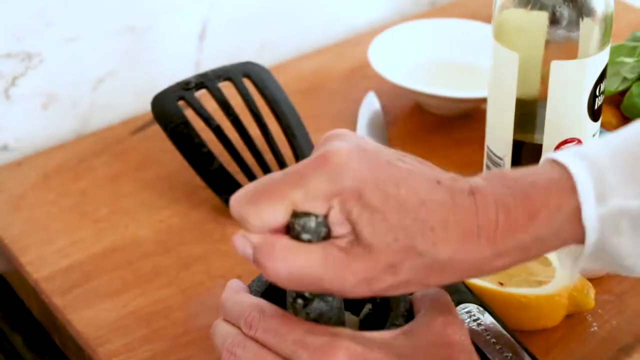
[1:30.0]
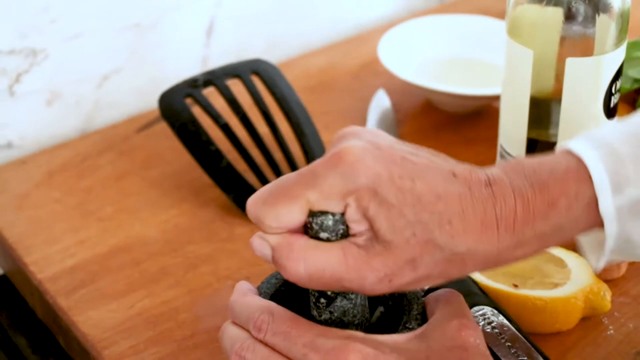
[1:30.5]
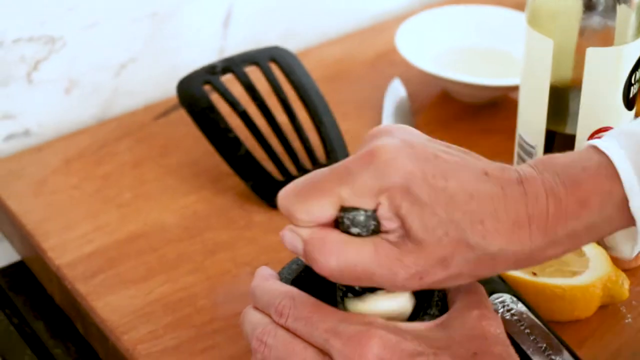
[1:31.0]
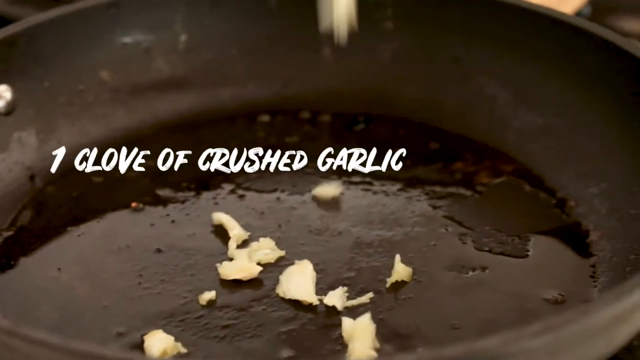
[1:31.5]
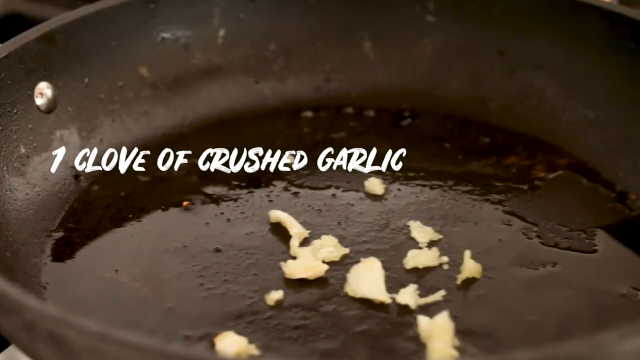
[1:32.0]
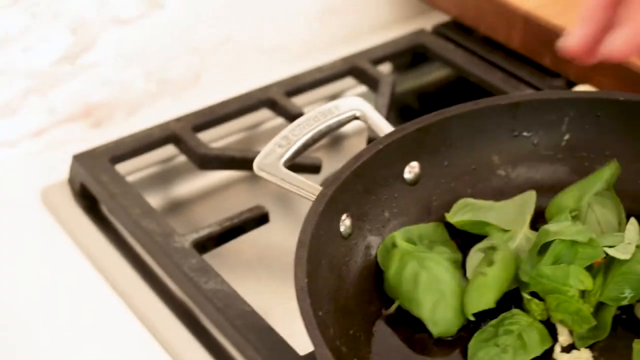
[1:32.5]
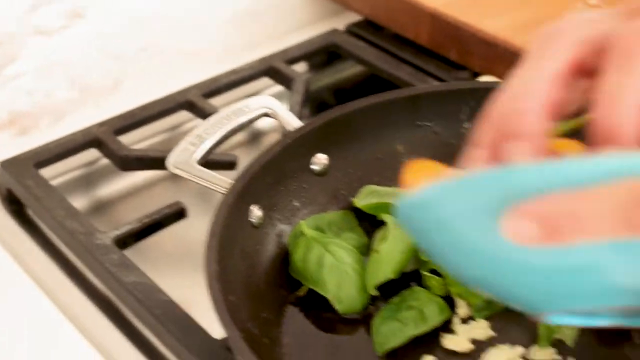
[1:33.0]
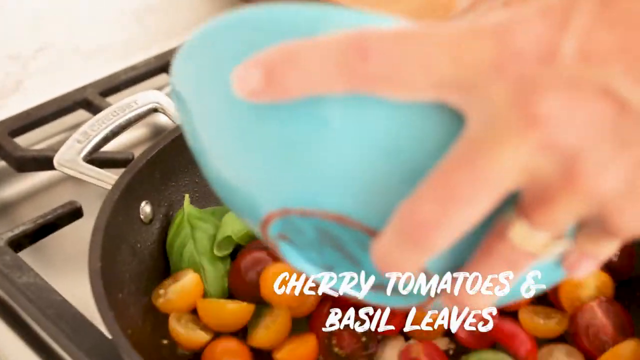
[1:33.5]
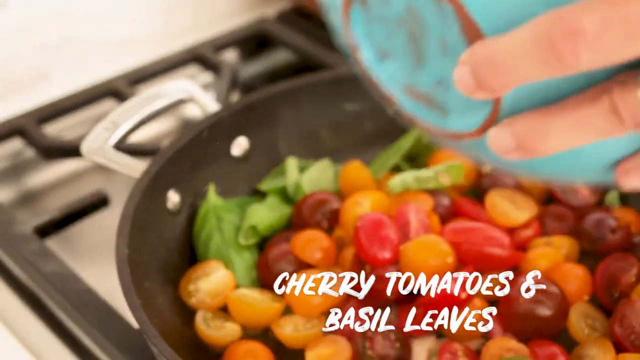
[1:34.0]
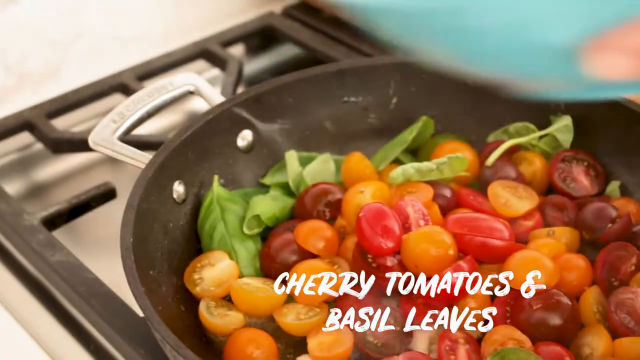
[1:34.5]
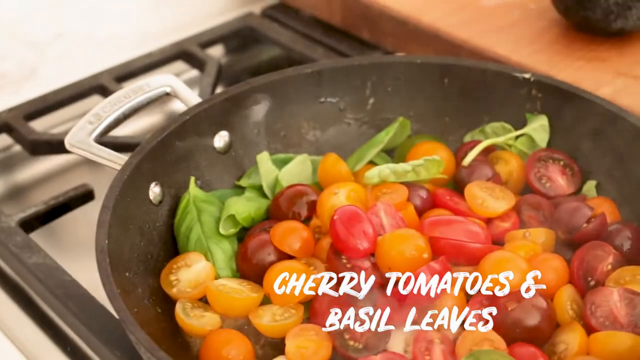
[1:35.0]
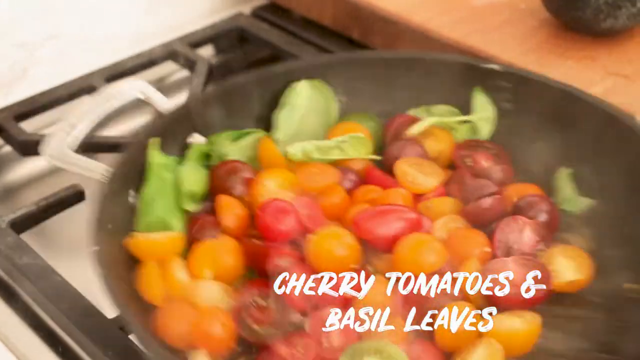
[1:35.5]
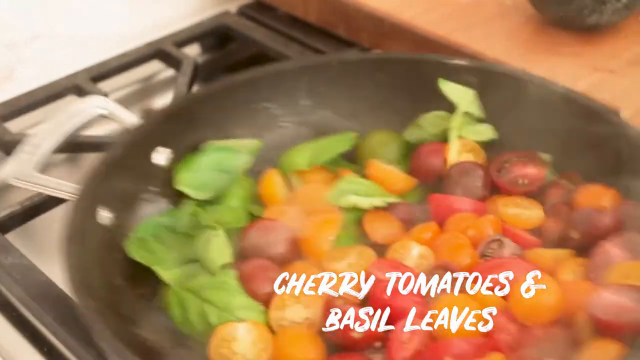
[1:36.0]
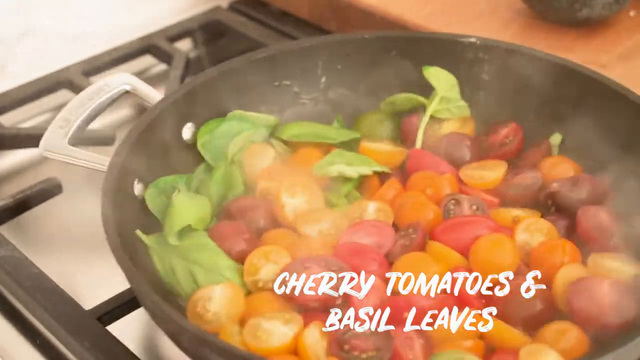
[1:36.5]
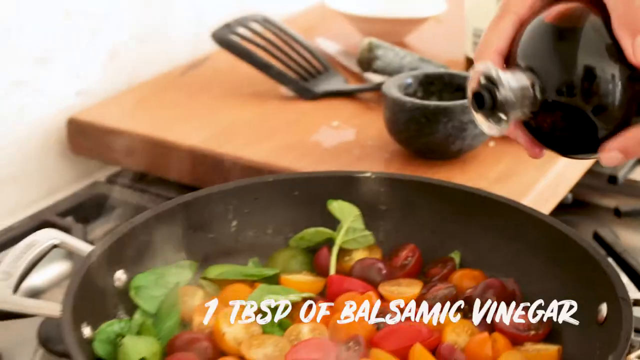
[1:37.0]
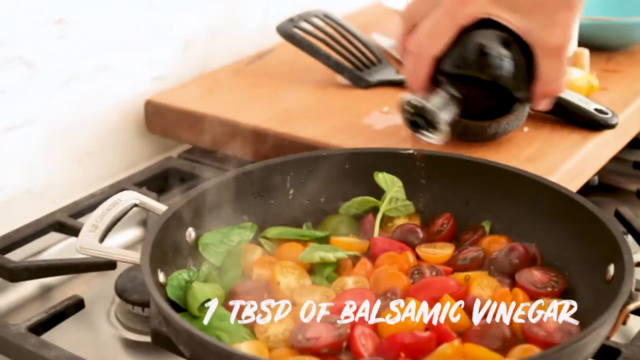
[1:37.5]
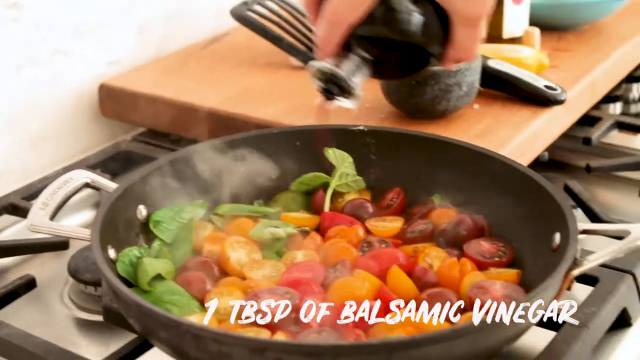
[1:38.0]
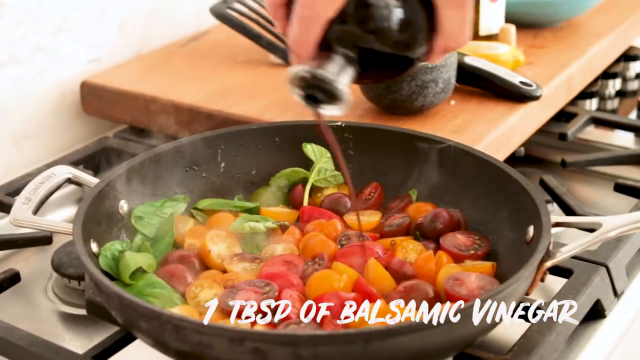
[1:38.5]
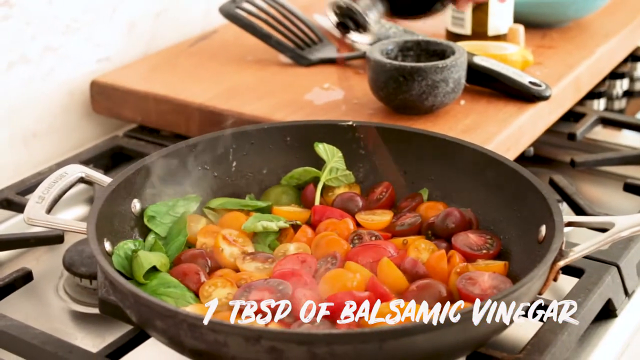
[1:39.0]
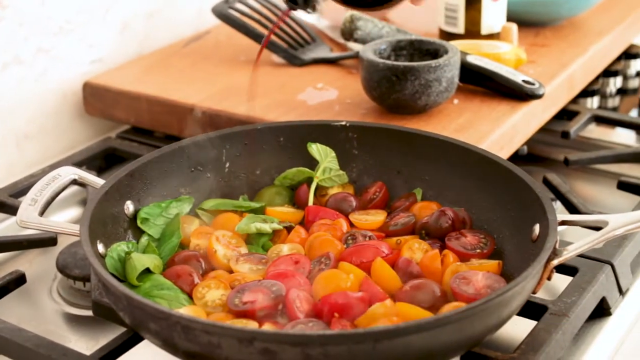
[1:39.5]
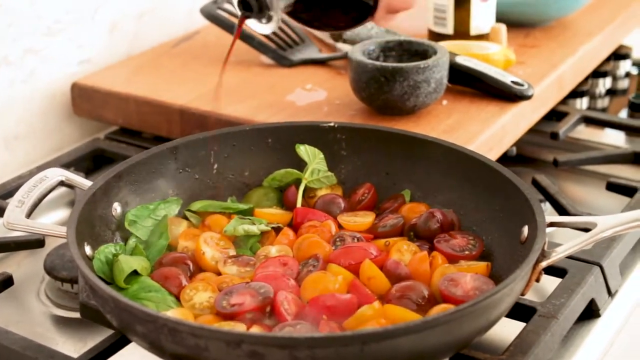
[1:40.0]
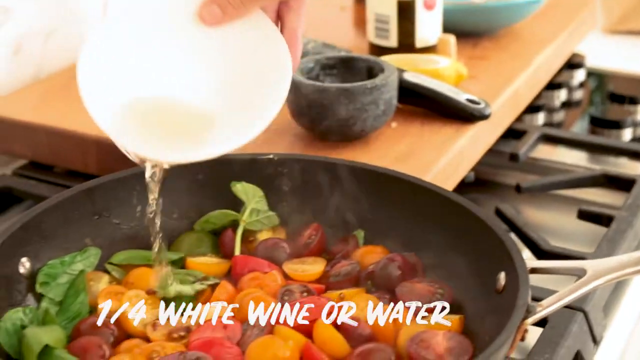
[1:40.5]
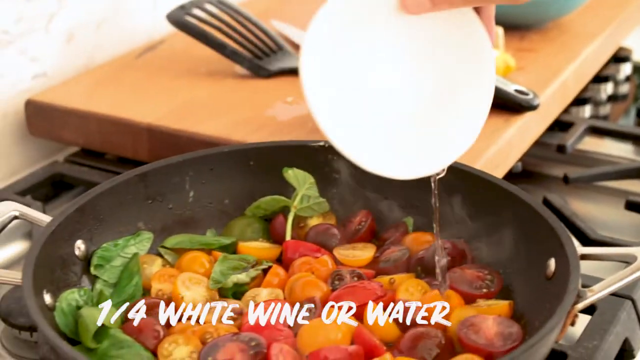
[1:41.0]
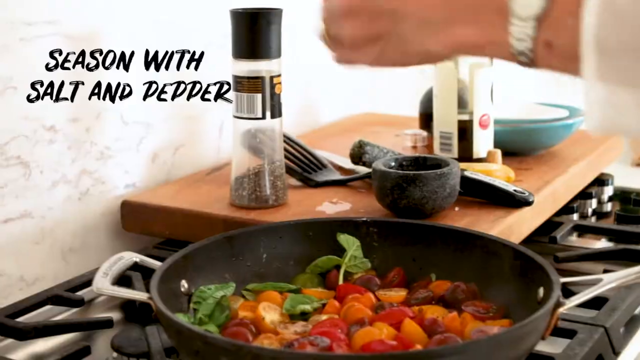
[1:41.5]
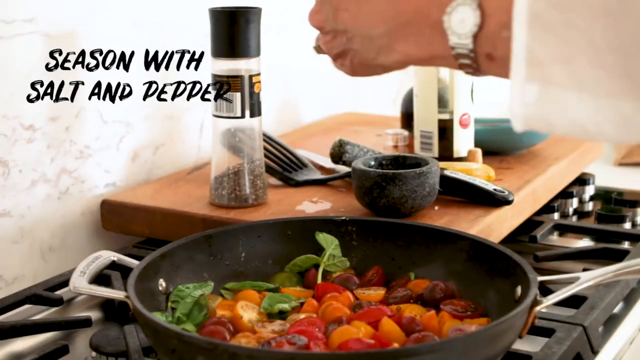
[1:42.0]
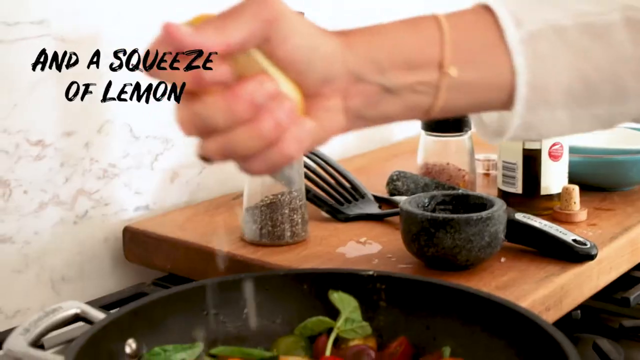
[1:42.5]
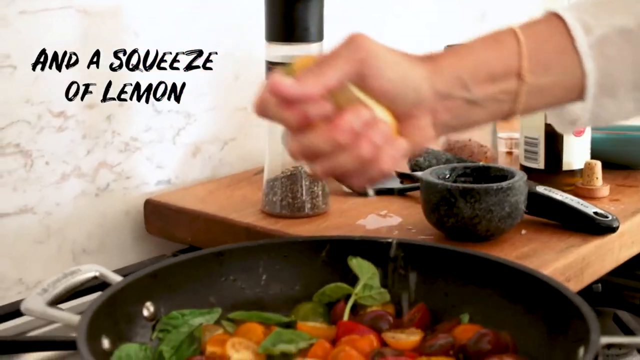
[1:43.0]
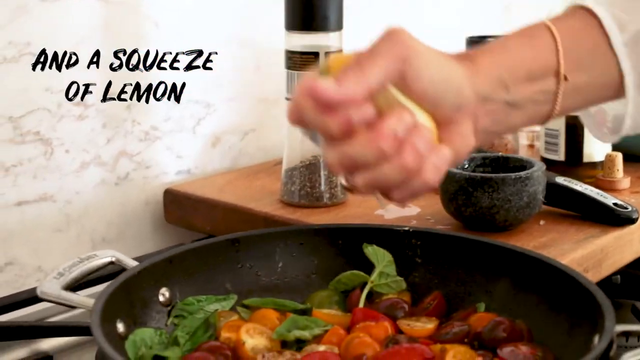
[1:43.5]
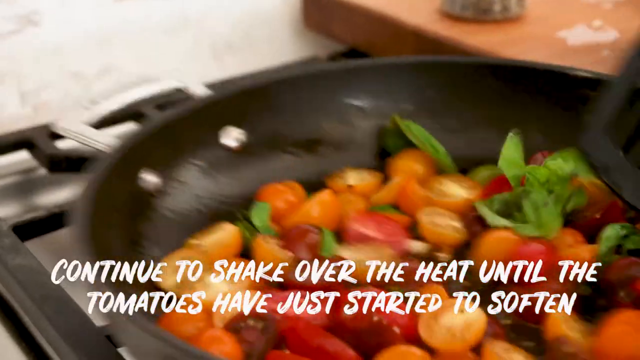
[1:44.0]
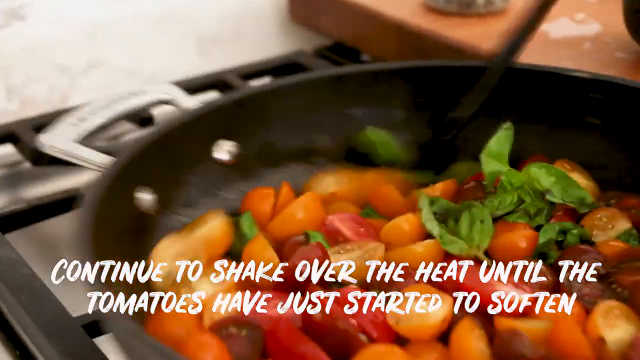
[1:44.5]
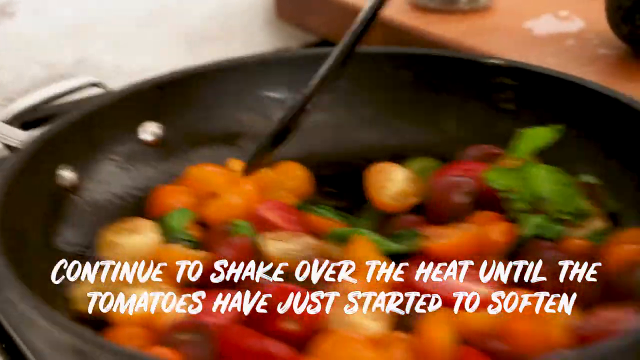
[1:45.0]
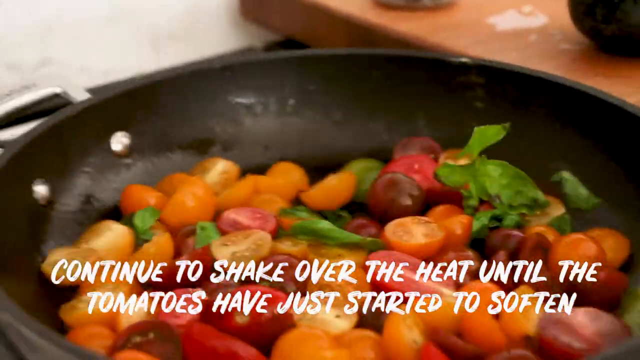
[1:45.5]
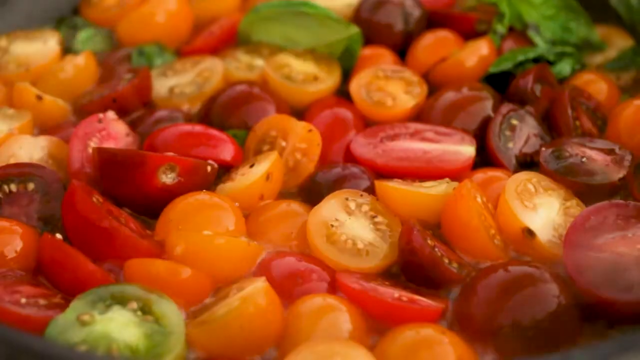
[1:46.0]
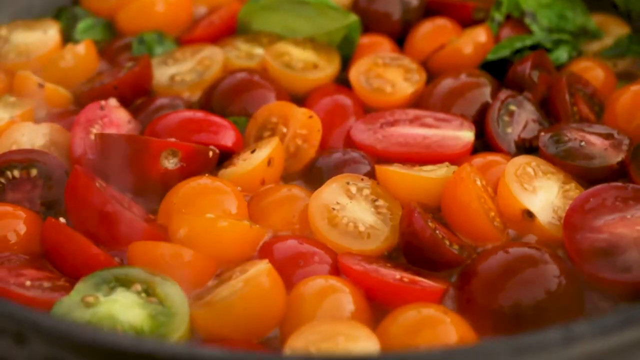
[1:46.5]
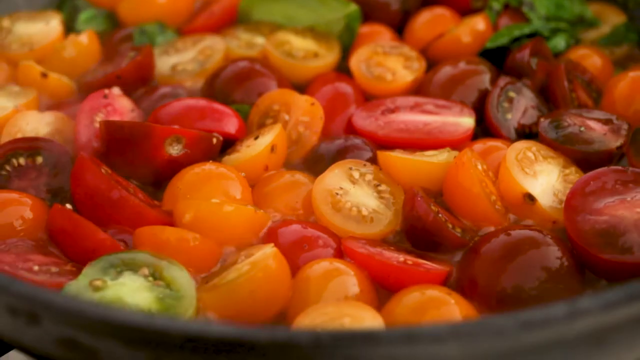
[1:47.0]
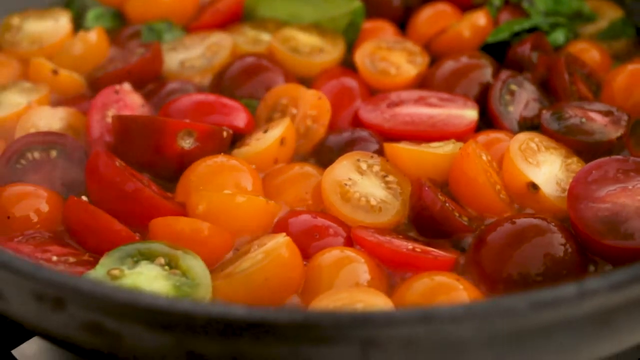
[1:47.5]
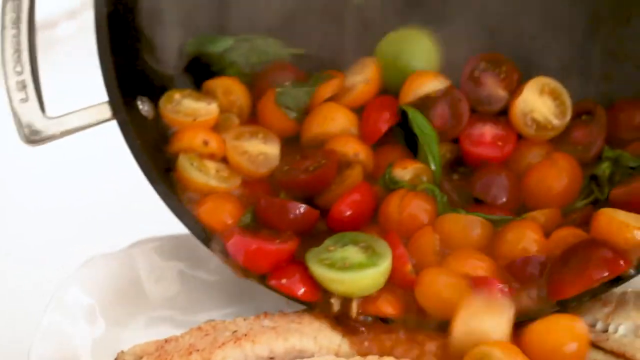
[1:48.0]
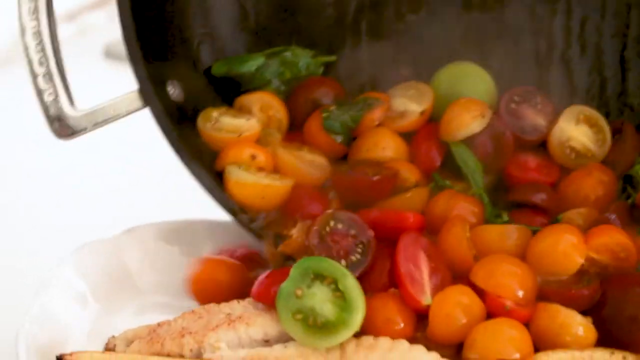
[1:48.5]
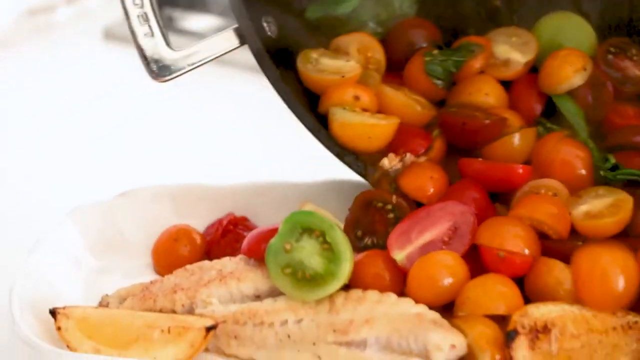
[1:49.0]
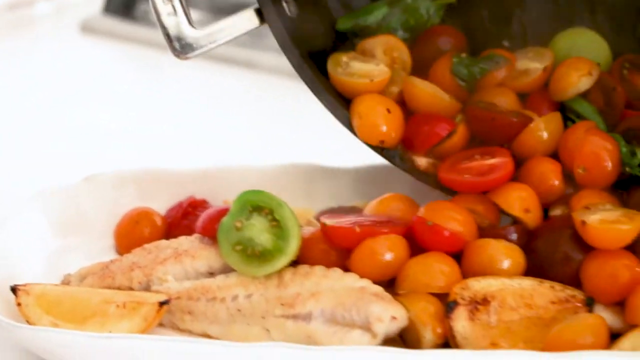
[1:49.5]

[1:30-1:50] Janine has finished cooking the fish fillets and lemon slices. She crushes one clove of garlic and puts it into the heated olive oil, then adds the cherry tomatoes with parsley. She squeezes some lemon, drizzles balsamic vinegar, and fries everything together. She adds white vinegar or water, along with a little salt and pepper. She then takes the pan off the stove and pours the whole cherry tomato mix, including the sauces and oil, over the serving dish holding the fish fillets and lemon. She uses the black plastic spatula while frying.